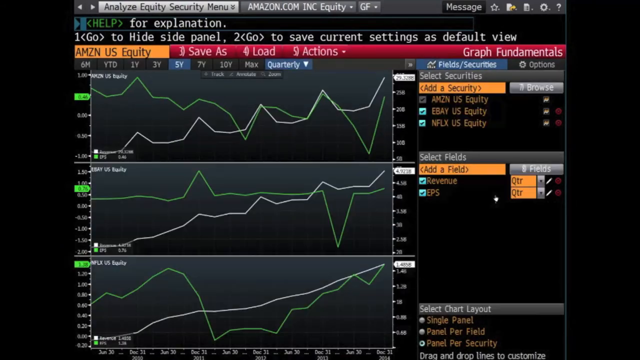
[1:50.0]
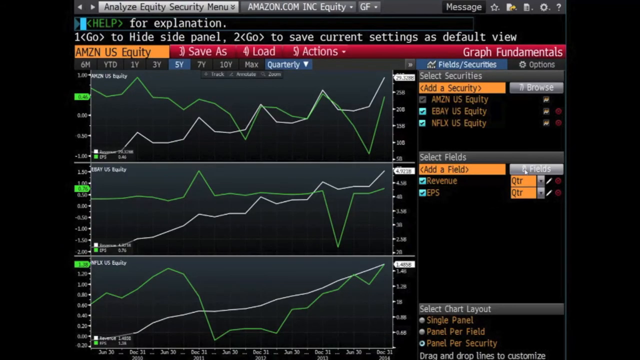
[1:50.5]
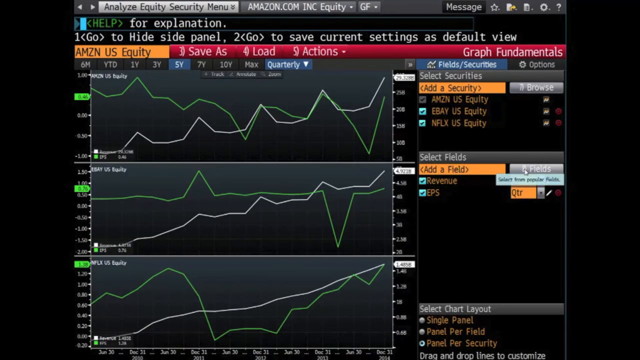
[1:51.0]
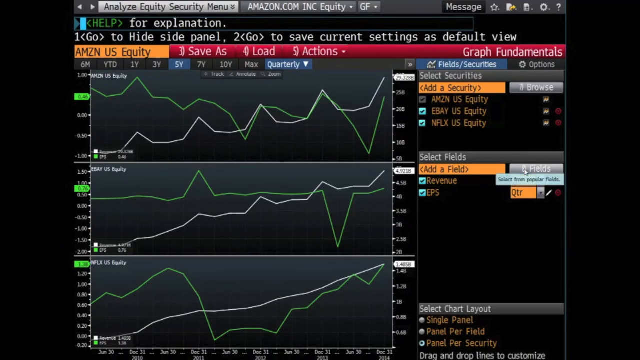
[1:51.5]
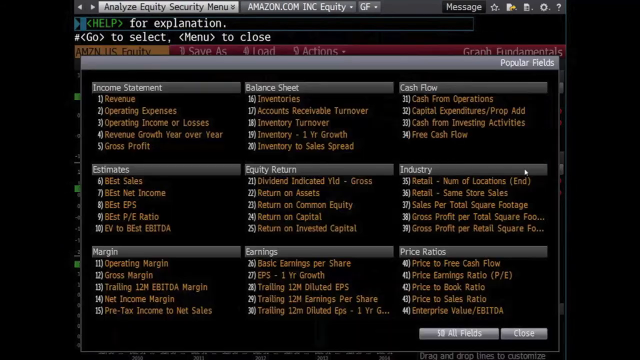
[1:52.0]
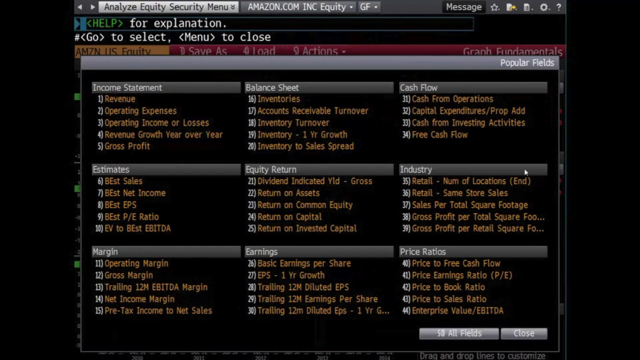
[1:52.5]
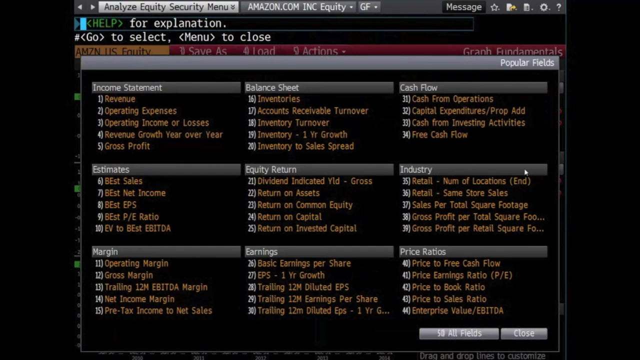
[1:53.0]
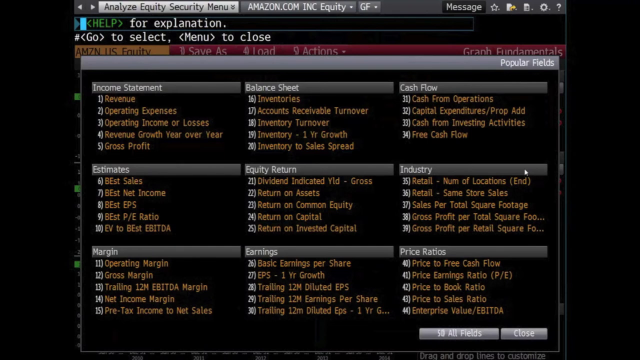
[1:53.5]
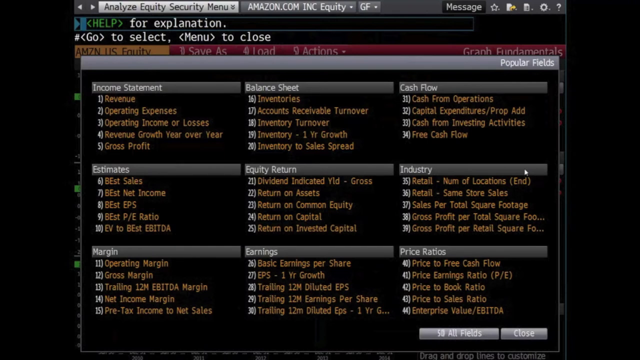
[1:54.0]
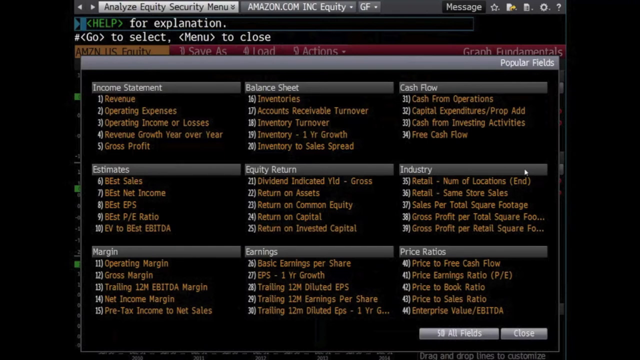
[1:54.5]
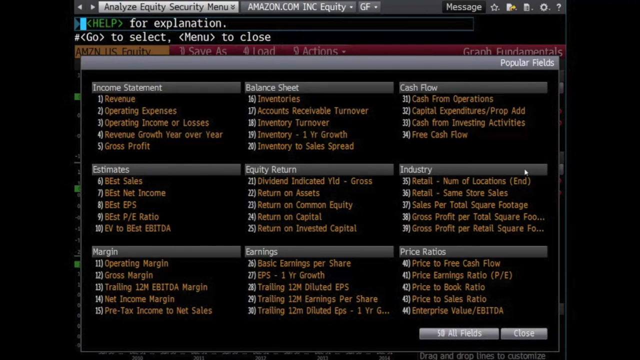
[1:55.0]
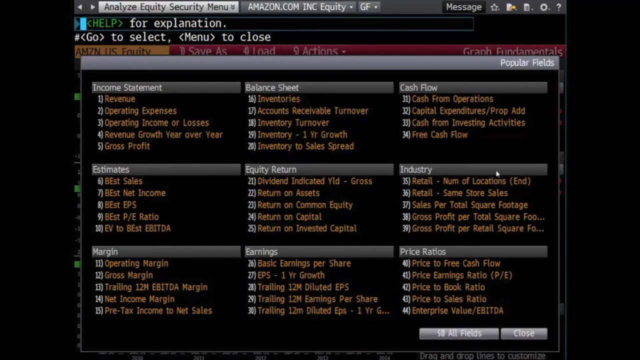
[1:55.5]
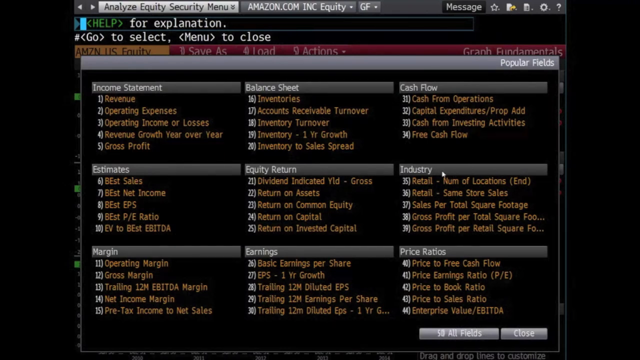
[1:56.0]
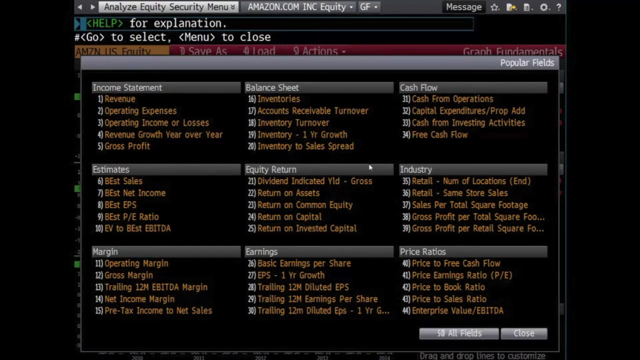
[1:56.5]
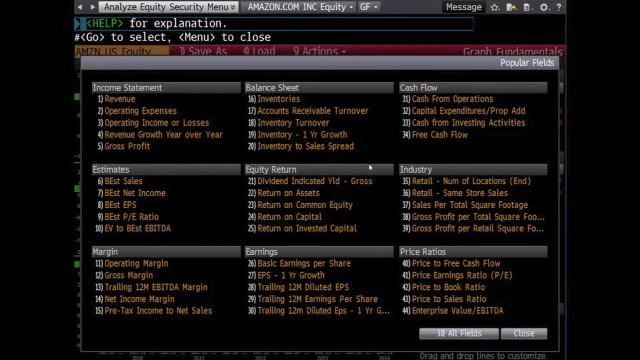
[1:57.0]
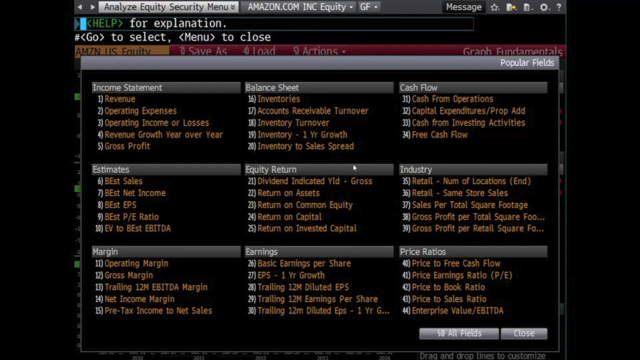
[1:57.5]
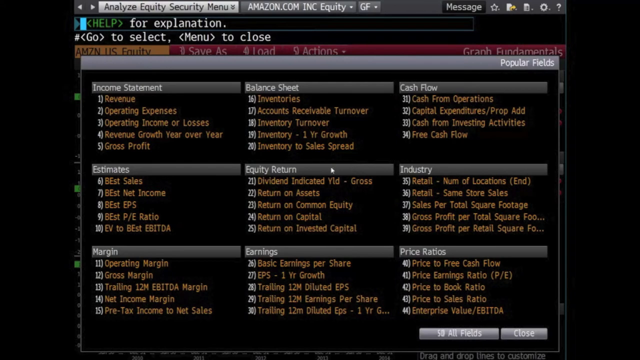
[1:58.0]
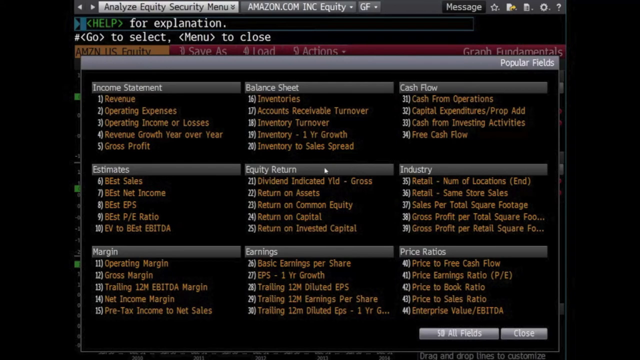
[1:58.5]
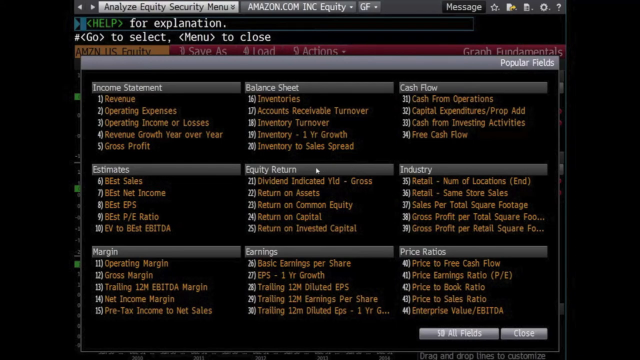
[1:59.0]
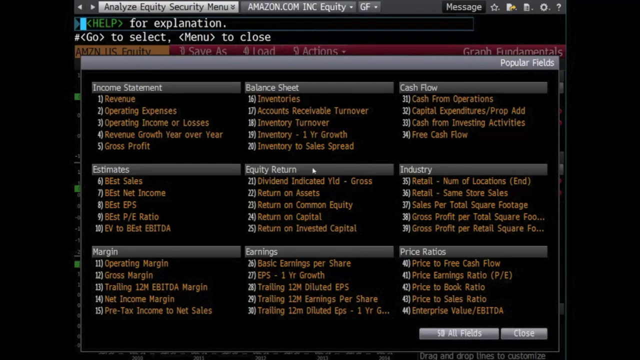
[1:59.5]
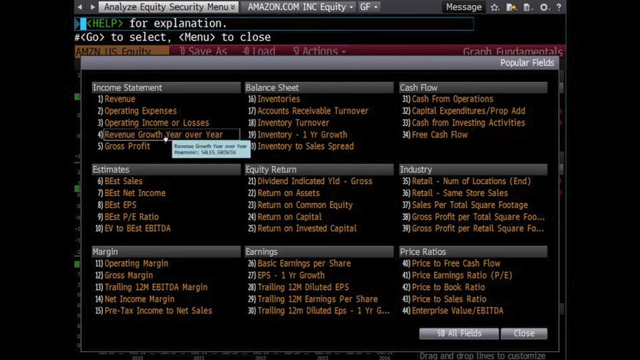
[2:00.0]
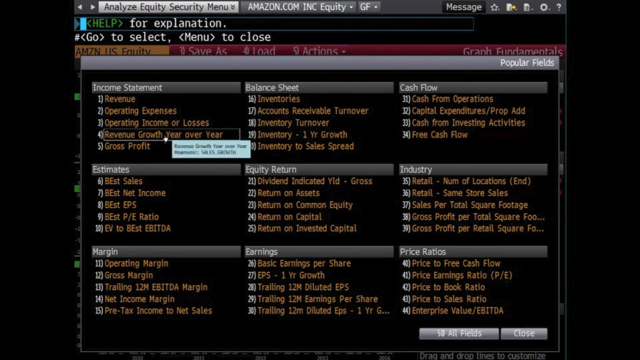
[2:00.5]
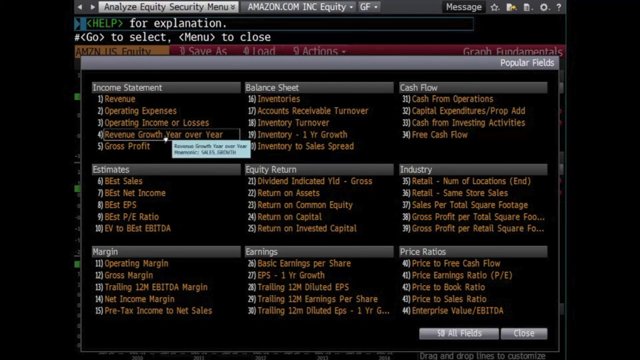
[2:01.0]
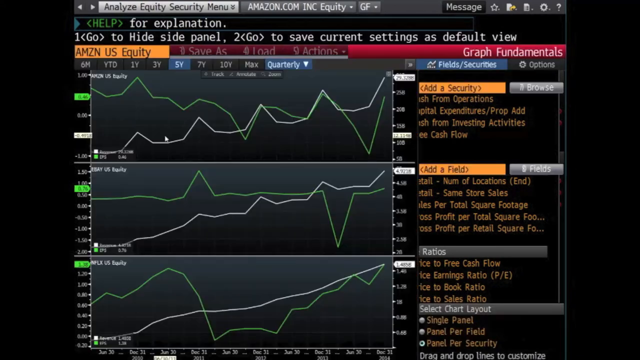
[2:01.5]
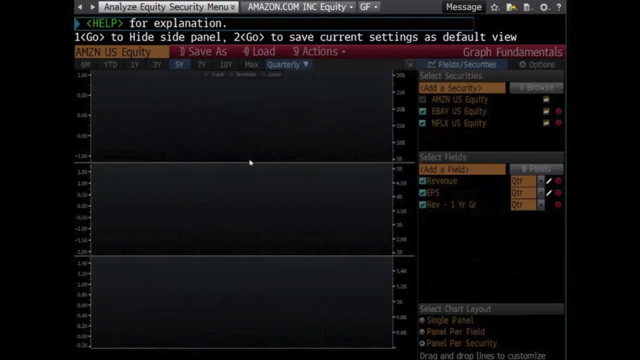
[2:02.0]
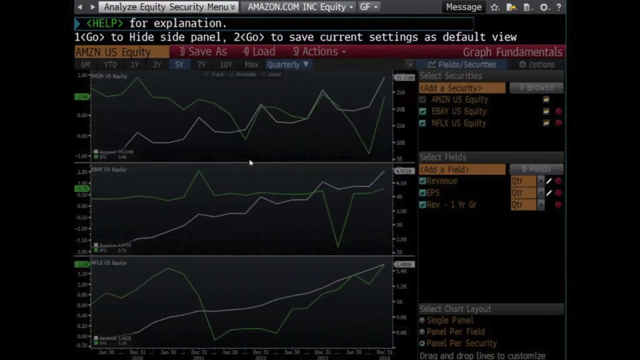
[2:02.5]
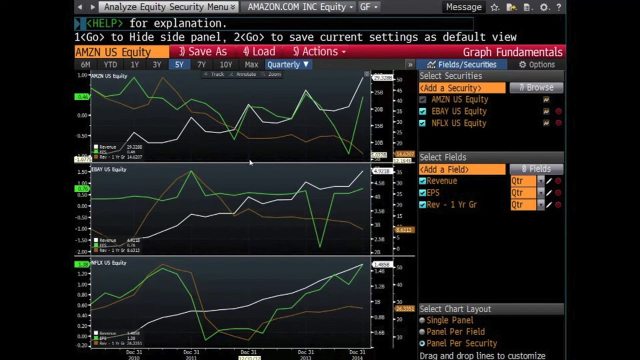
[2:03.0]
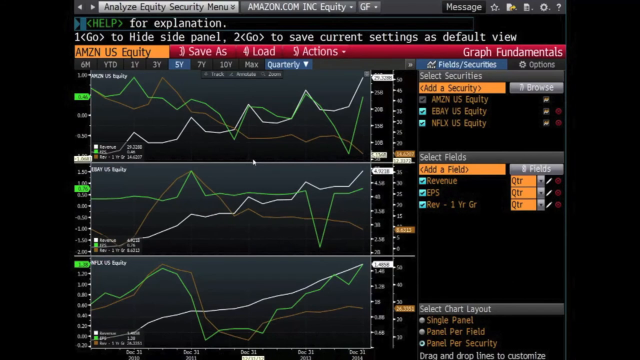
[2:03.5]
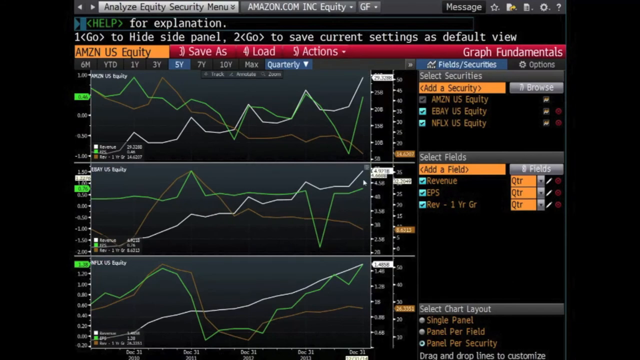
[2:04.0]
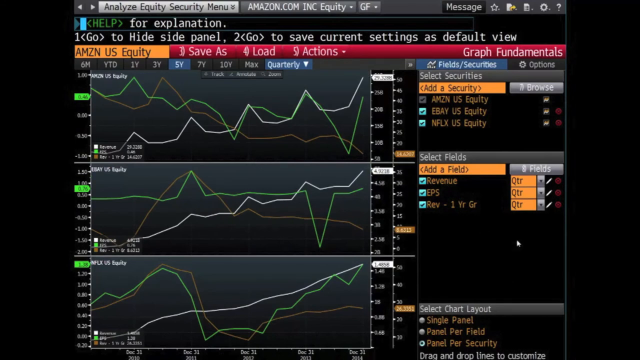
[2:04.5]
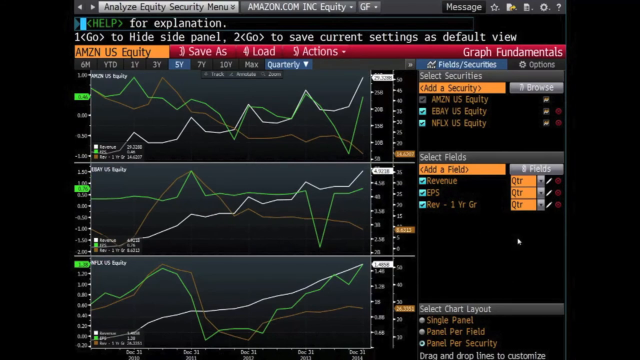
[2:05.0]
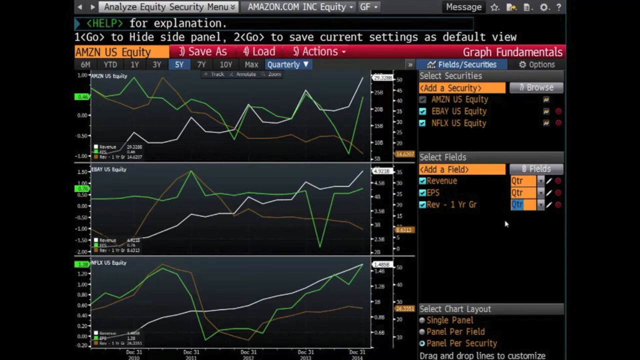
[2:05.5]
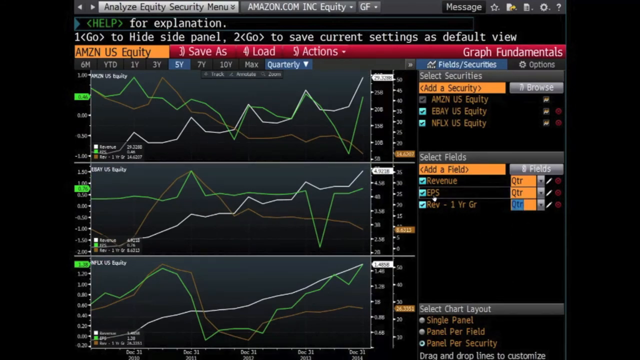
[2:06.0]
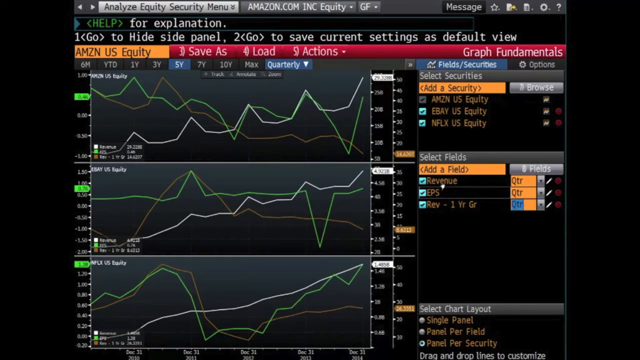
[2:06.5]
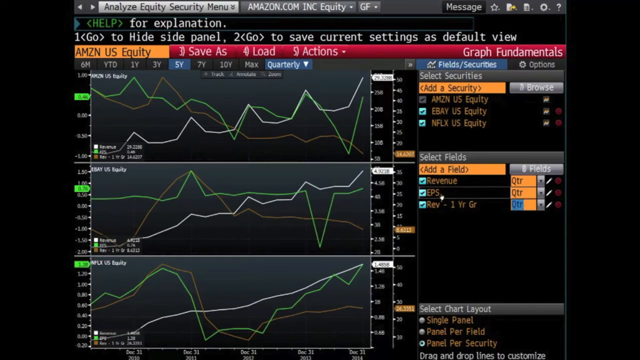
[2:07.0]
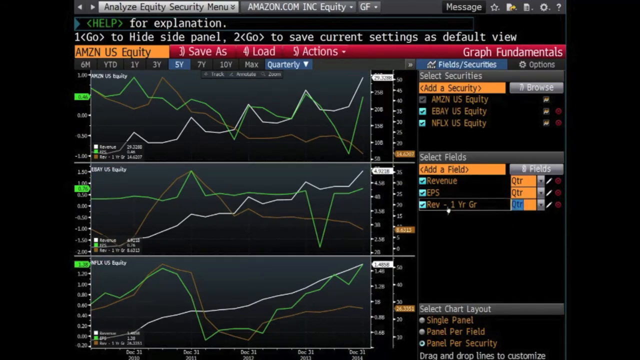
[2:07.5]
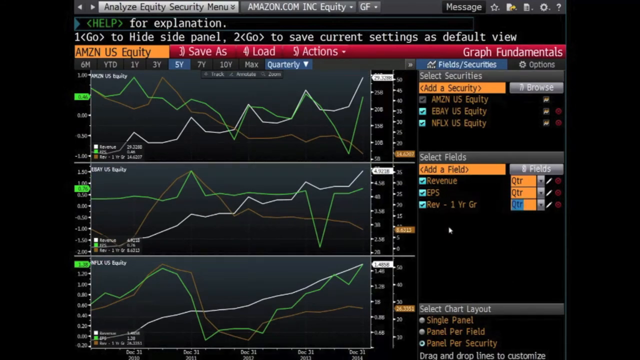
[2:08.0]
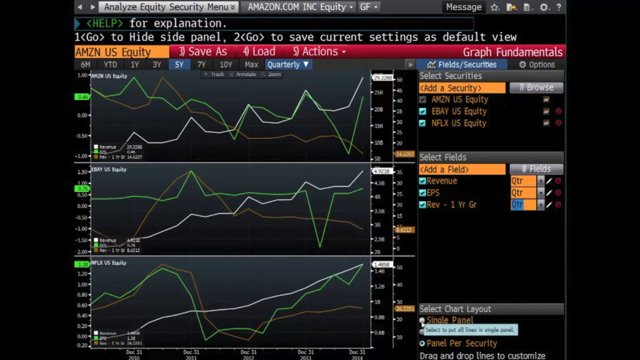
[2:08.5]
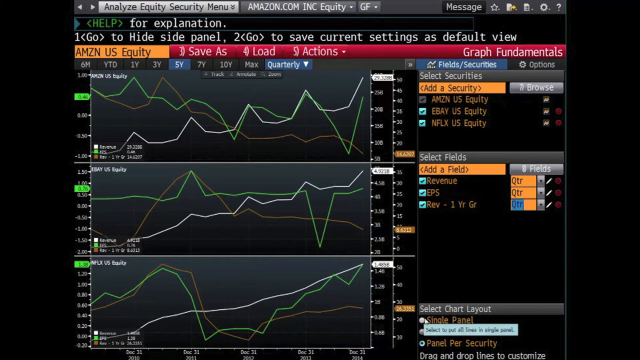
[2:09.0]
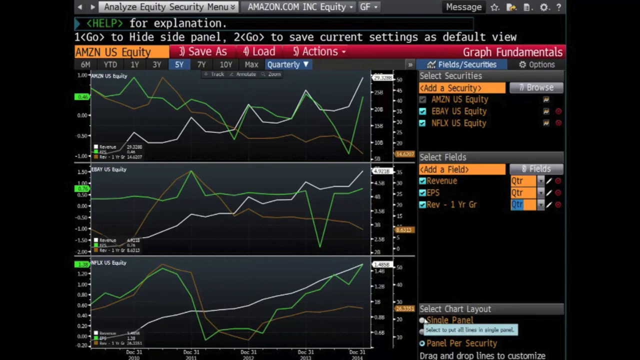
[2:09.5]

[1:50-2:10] Software showing information about how equities are doing is on screen. In the first few seconds, there are graphs of three securities: Amazon, eBay and Netflix, containing two fields called Revenue and EPS. The person using the software then tries to add another field. A long list of fields appears, grouped into nine categories: income statement, balance sheet, cash flow, estimates, equity return, industry, margin, earnings and price ratios; there may be more below that is not visible. There are 44 fields visible on the screen. The person clicks on revenue growth year over year, which changes the graphs, adding a brown line across all three companies' graphs.